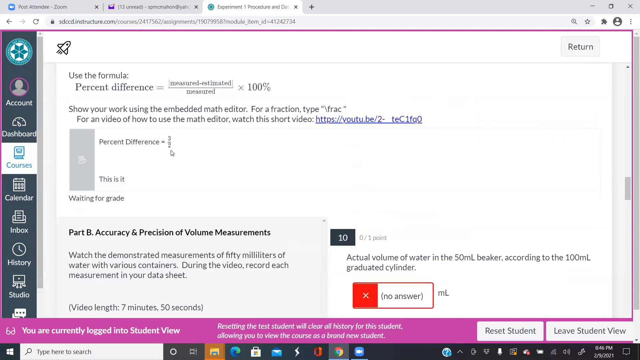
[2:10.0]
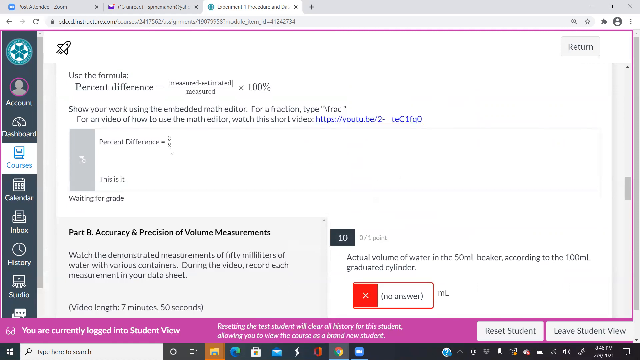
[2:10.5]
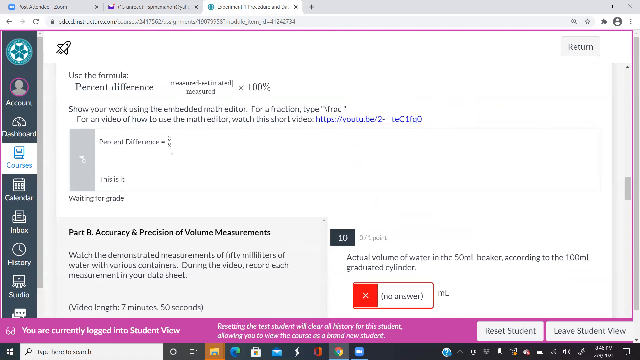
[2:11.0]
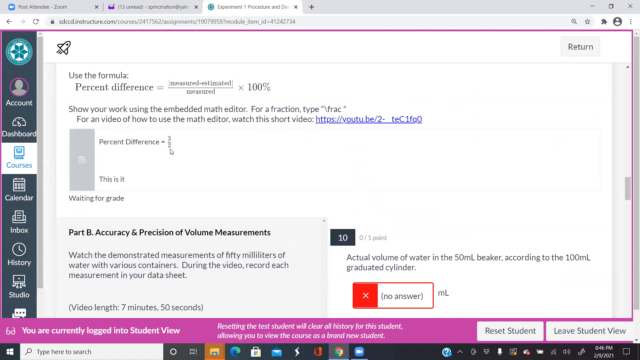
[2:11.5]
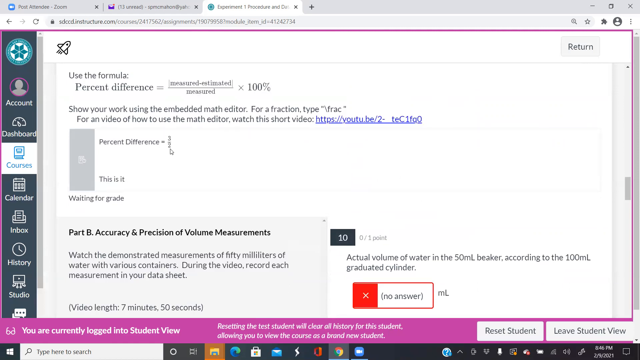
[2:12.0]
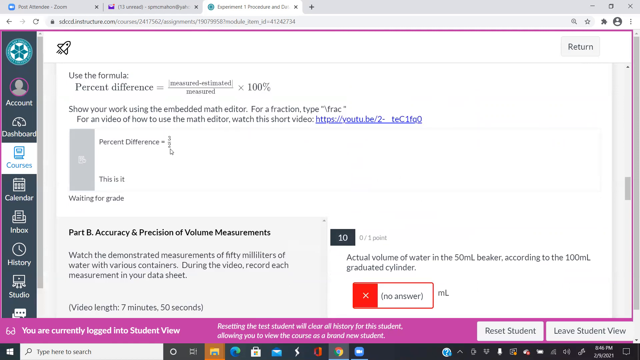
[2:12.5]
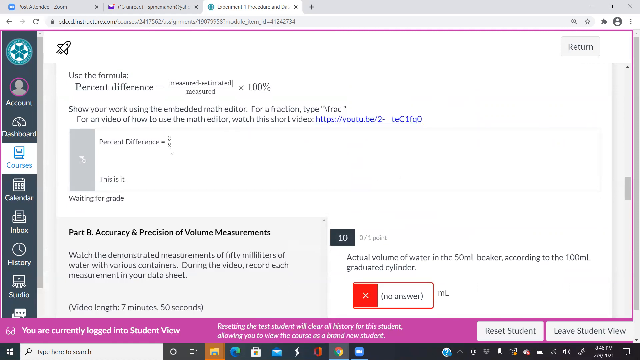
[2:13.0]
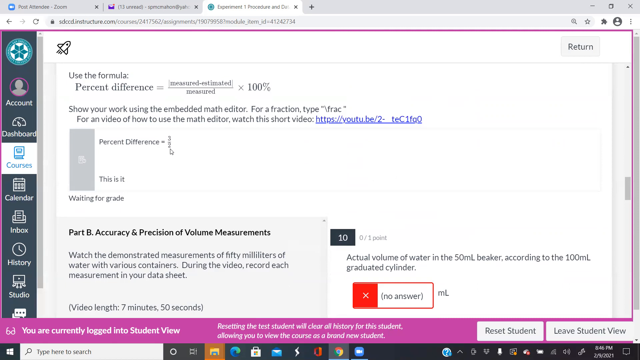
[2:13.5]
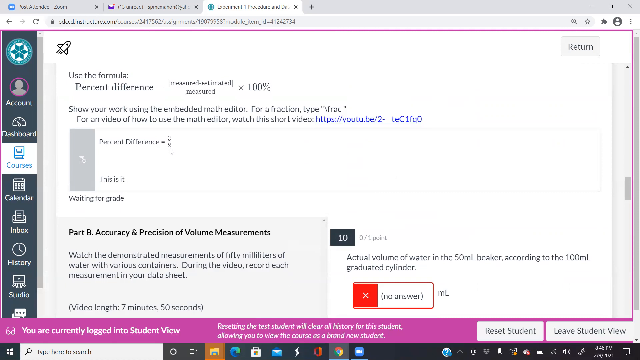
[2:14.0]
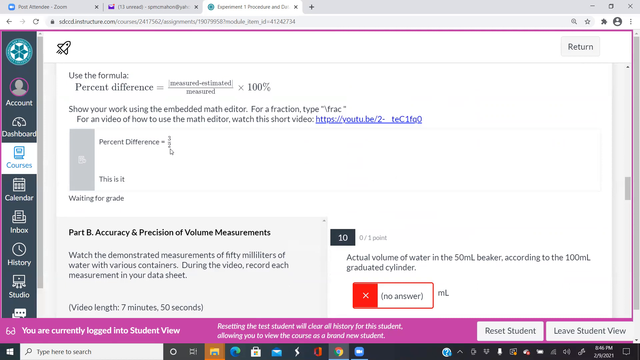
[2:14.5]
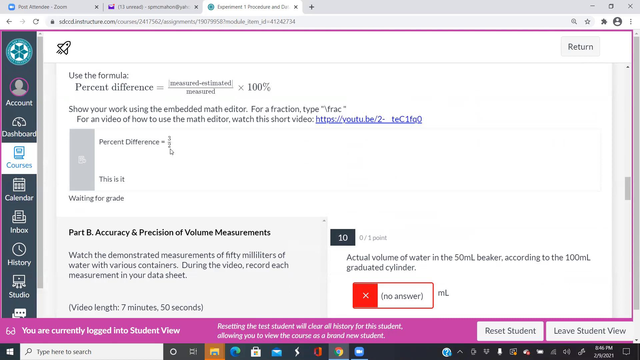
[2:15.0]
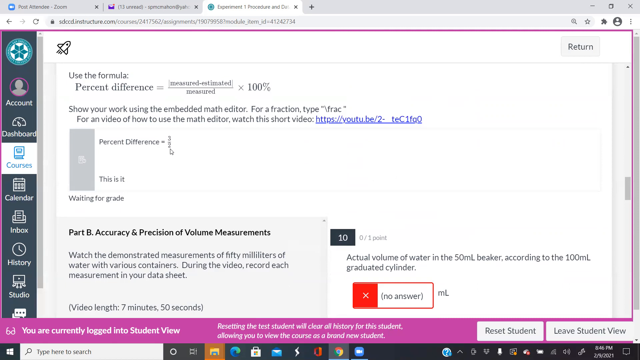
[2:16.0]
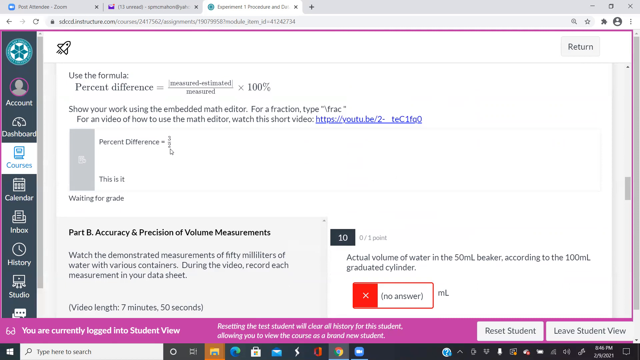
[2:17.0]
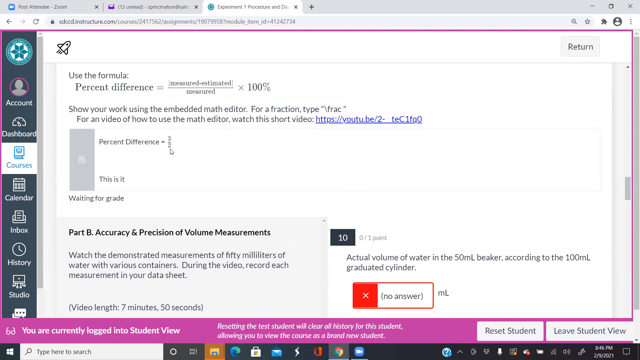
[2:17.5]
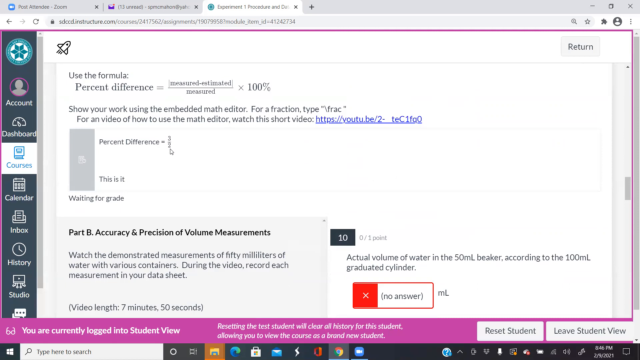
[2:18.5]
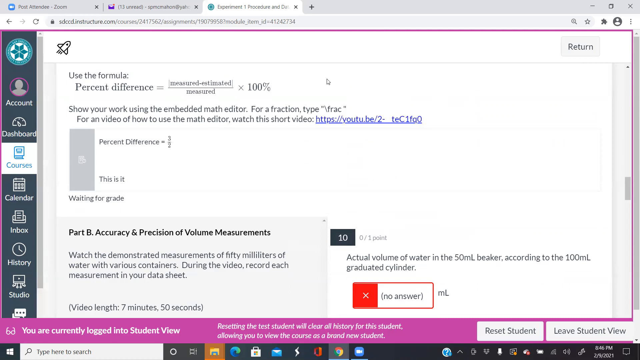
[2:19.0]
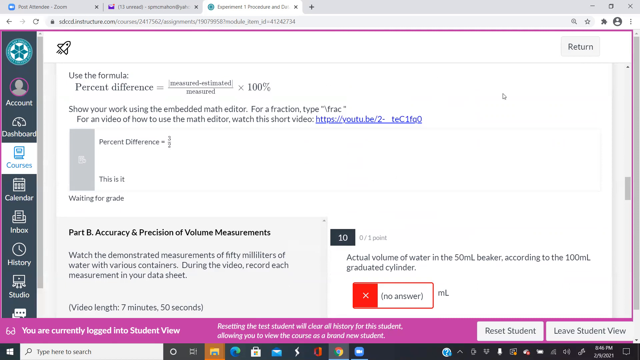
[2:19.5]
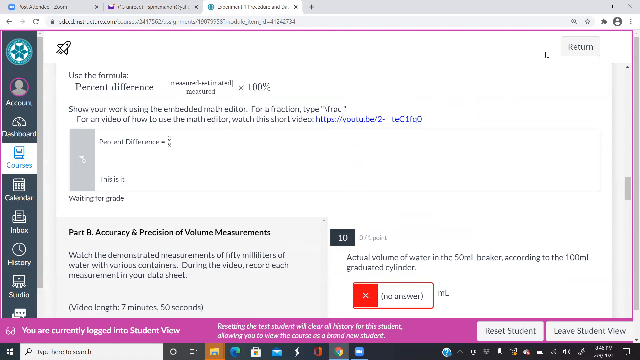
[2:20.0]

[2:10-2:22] A student is working on an assignment with "experiment one data sheet" written on it, in the student view. On the far left are tabs labelled Account, Dashboard, Courses, Calendar, Inbox, History and Studio, and the student is working under the Courses tab, on part A, called "estimates". They scroll down to question number nine, about percent difference, and click on the MathQuill toolbar to answer it. They type a fraction, 3 divided by 2, as the answer and type "this is it". They then scroll up and down again and click submit without answering all of the questions. A pop-up message asks if they are sure they want to submit even though the other questions are not answered, and the student continues anyway.